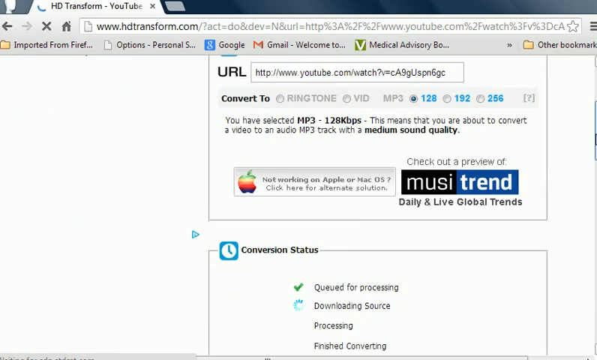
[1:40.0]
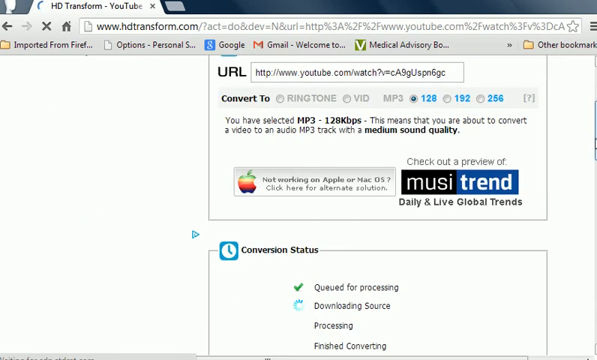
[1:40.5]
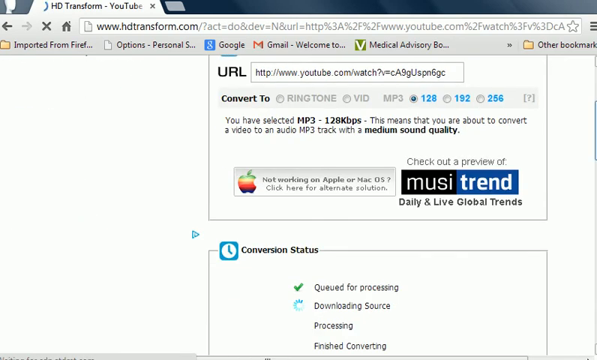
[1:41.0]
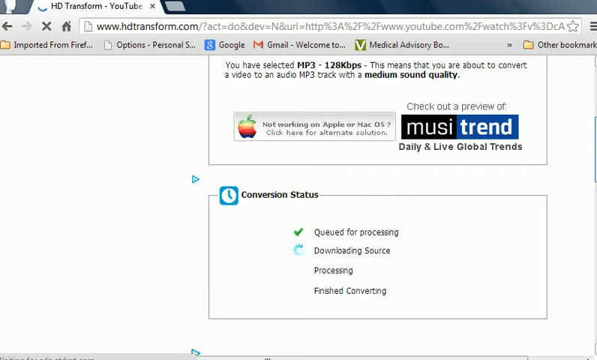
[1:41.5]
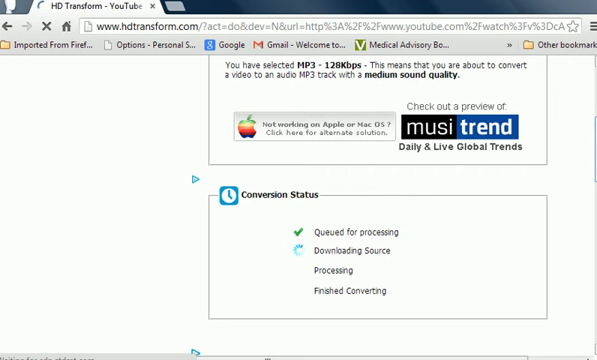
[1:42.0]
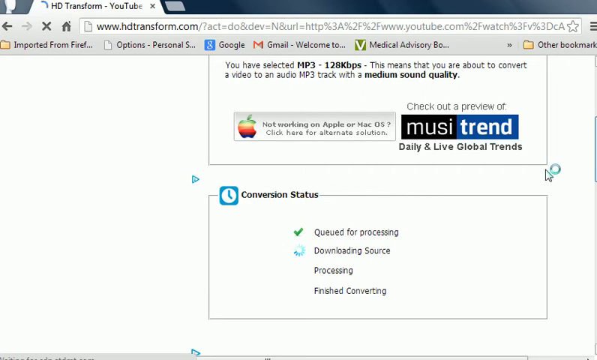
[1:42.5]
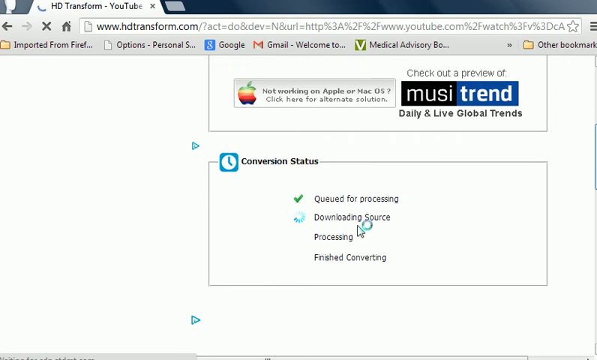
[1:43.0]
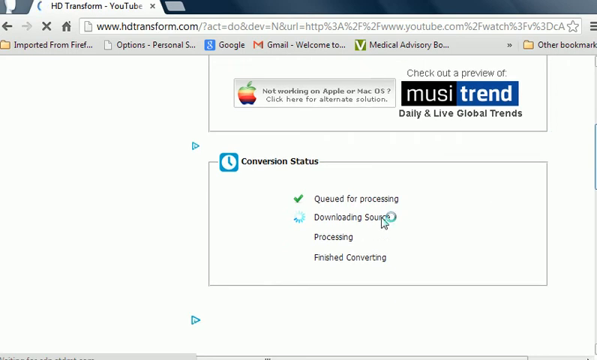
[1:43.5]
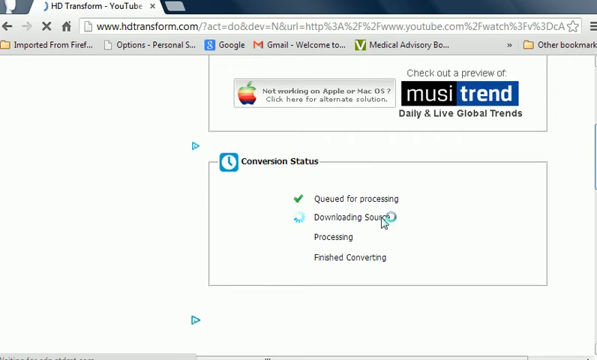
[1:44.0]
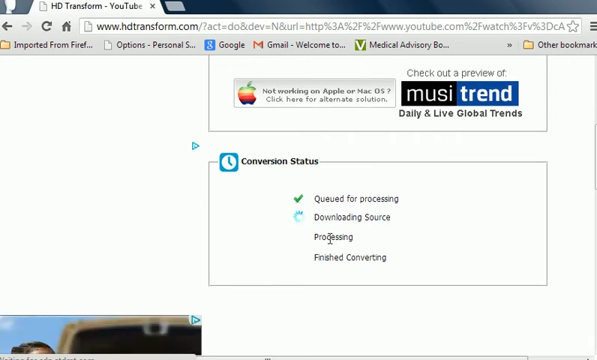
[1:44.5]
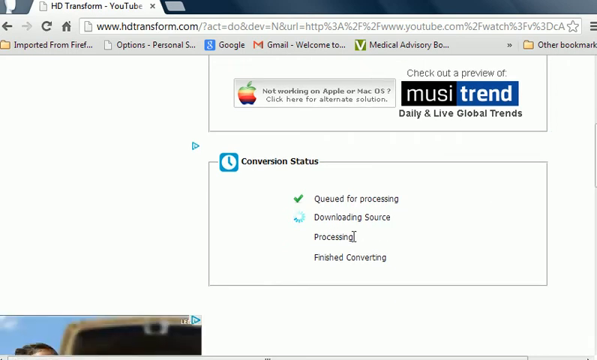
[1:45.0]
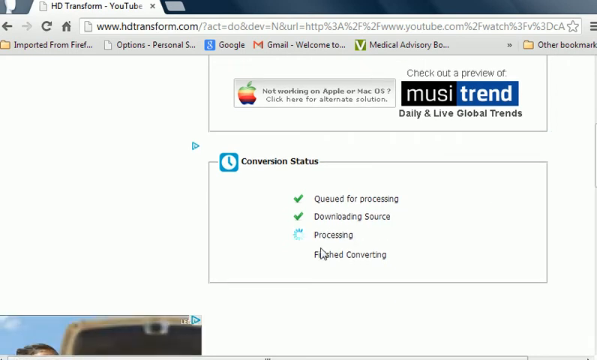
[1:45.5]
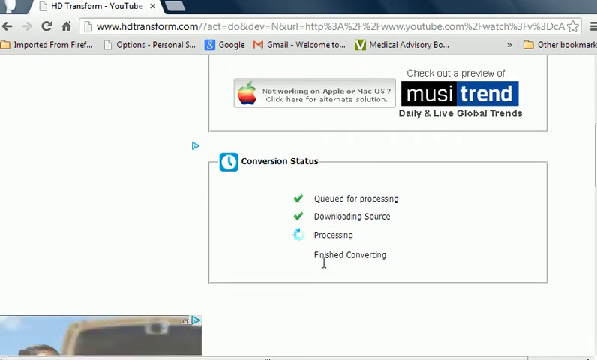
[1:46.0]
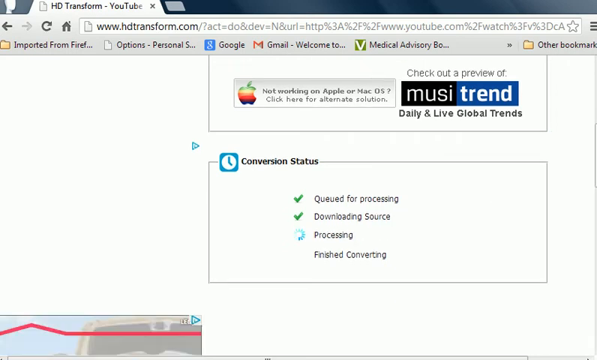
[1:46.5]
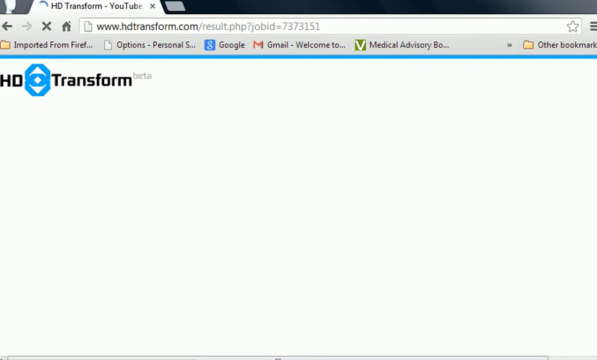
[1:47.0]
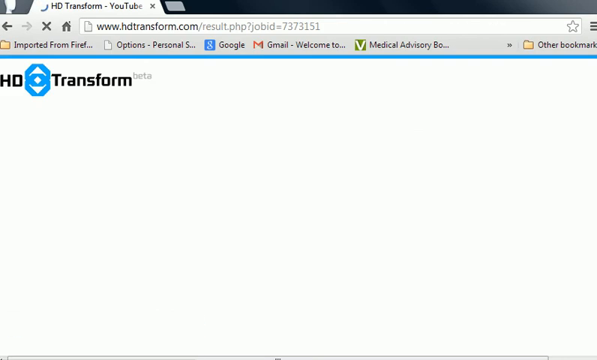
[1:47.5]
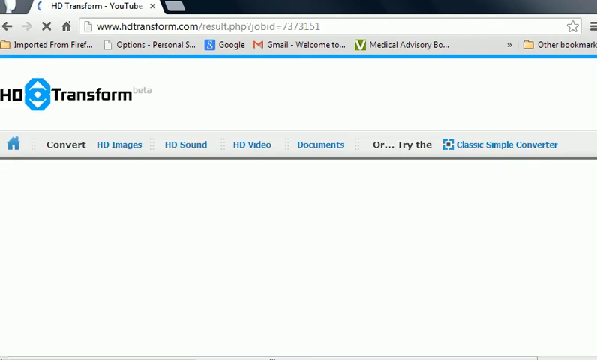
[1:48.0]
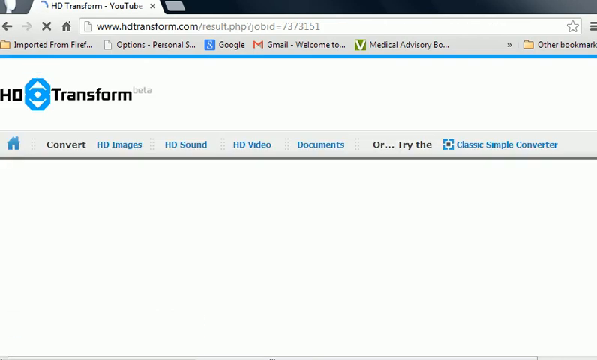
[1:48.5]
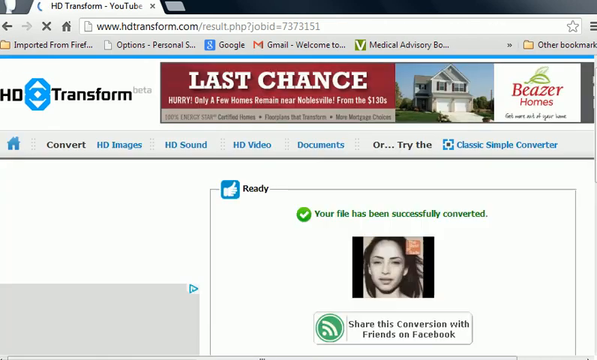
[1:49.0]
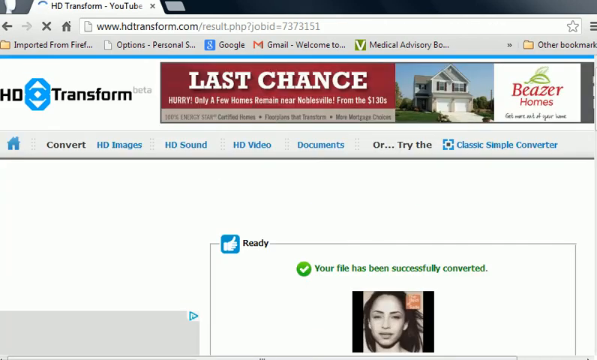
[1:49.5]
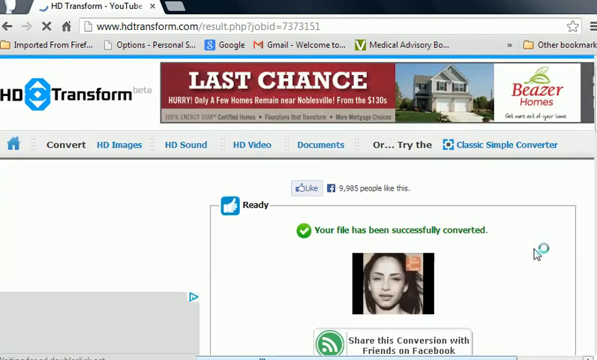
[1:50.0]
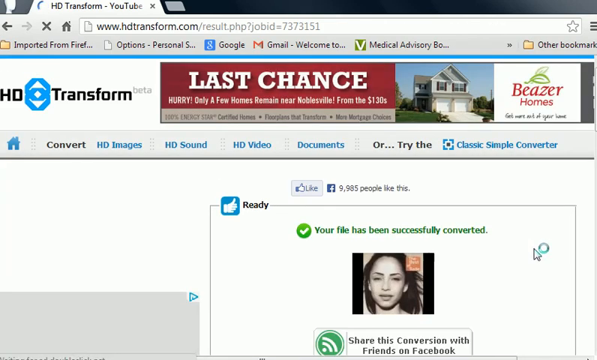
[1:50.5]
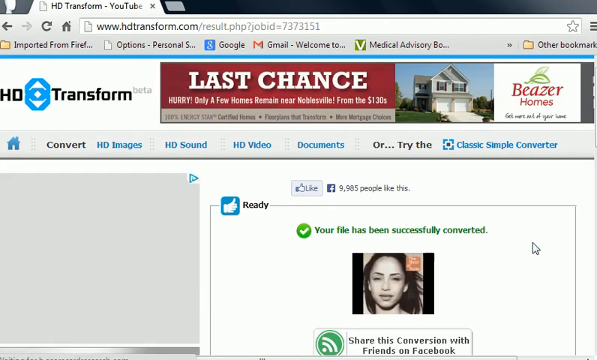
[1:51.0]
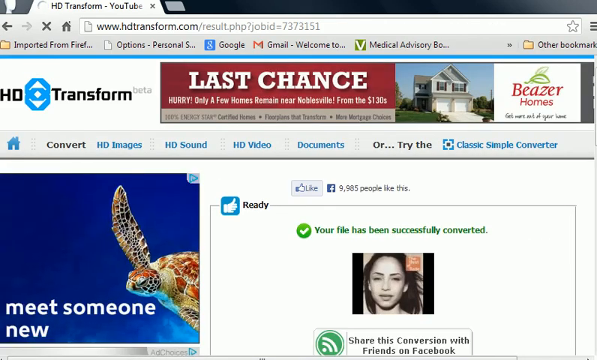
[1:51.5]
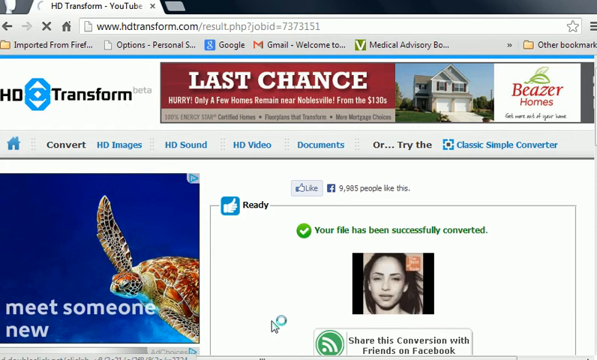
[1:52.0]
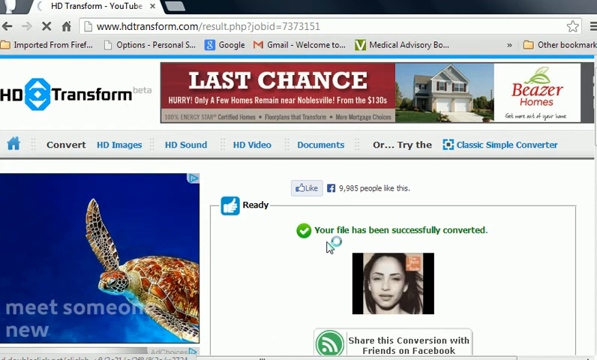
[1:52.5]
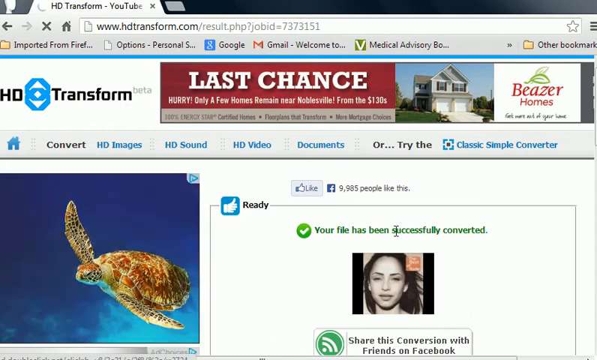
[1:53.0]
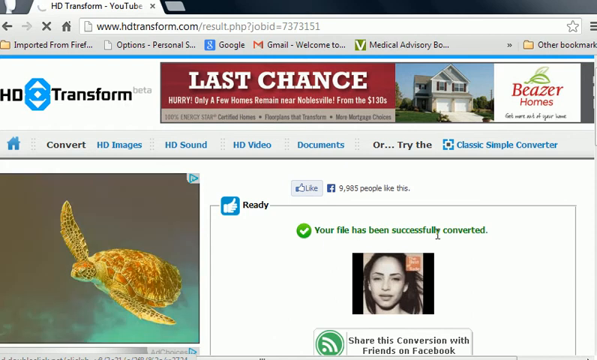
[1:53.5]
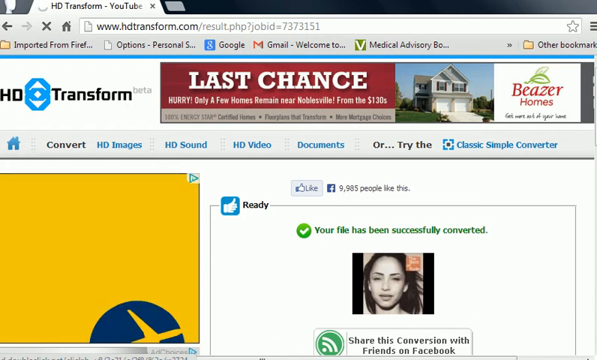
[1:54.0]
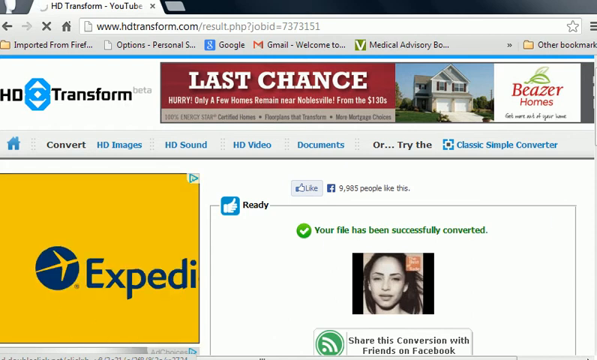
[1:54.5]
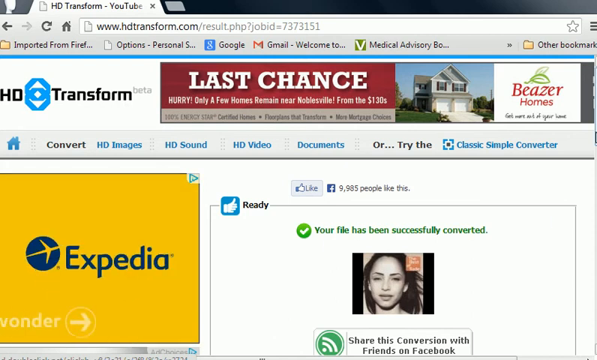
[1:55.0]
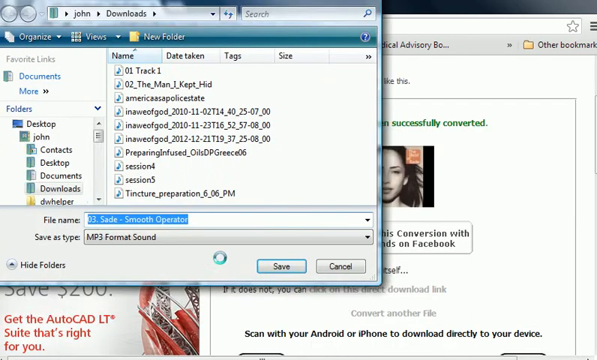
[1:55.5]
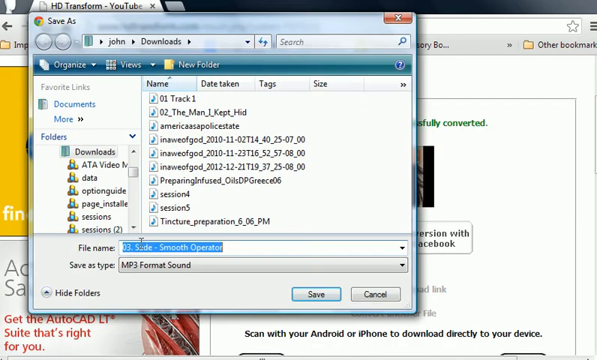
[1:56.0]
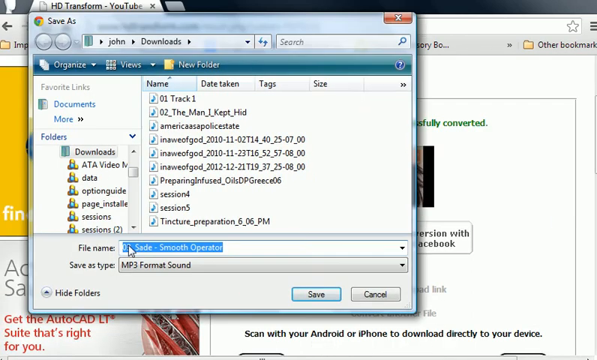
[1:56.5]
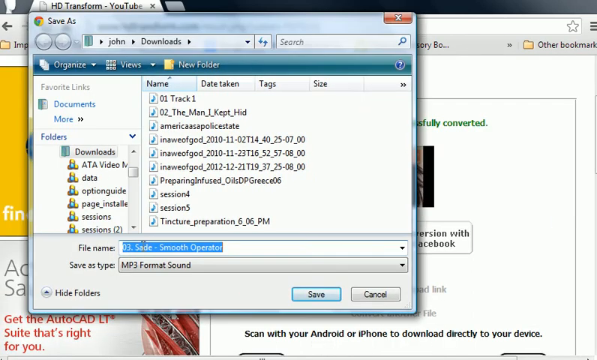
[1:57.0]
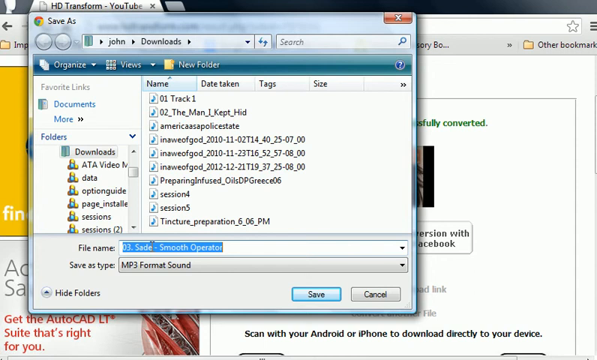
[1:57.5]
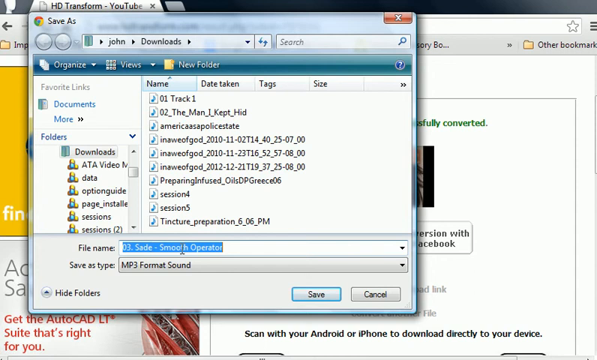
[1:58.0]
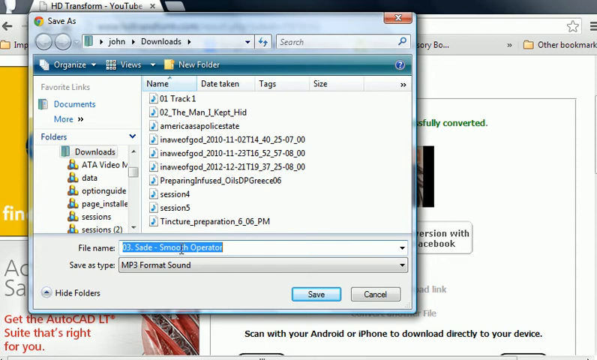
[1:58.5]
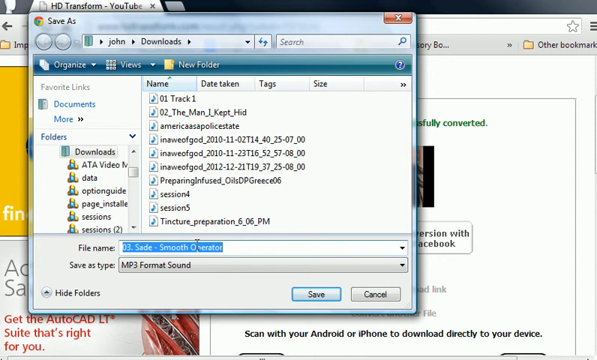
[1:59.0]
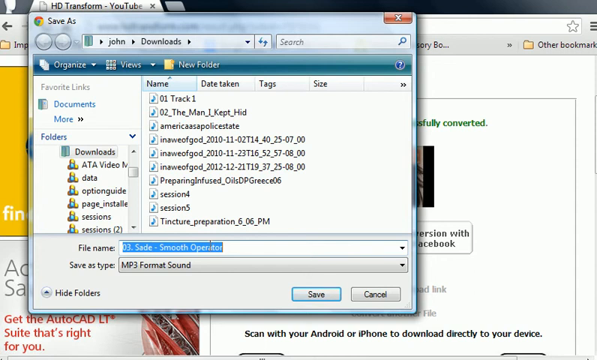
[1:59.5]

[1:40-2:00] The HD Transform website has a white background. In the top box, the text "URL" is to the left of an input text box holding the URL of a YouTube video, and in the "Convert To" radio button group the "128" option is selected. Text reads "you have selected MP3, 128 kbps. This means you are about to convert a video to an audio MP3 track with a medium sound quality." The bottom box is titled "conversion status" and lists "queued for processing," "downloading source," "processing," and "finished converting." Initially there is a green checkmark to the left of "queued for processing" and an animated blue wait symbol to the left of "downloading source." The white mouse pointer, with the blue wait signal to the northeast of it, indicates "downloading source." Next, a green checkmark appears to the left of "downloading source" and the blue waiting icon appears to the left of "processing." Finally, "processing" and "finished converting" have green checkmarks. Another screen follows with a box titled "ready" that reads "your file has been successfully converted," along with the thumbnail of the converted YouTube video. Above this box is a Facebook like button showing the number of people who like it. On the left of the screen is a video ad with a sea turtle that says "meet someone new." The mouse indicates the text "your file has been successfully converted" from left to right. The file is downloaded, and the file name in the dialog, 03. Sade - Smooth Operator, is selected.